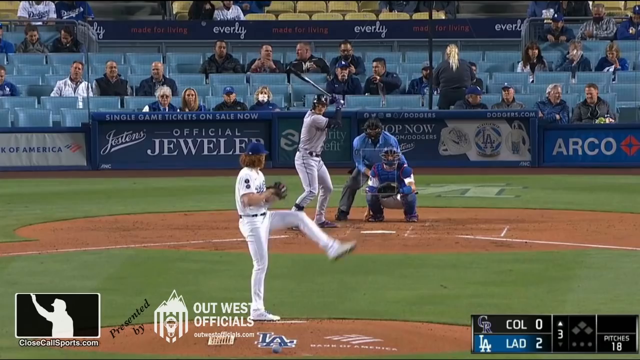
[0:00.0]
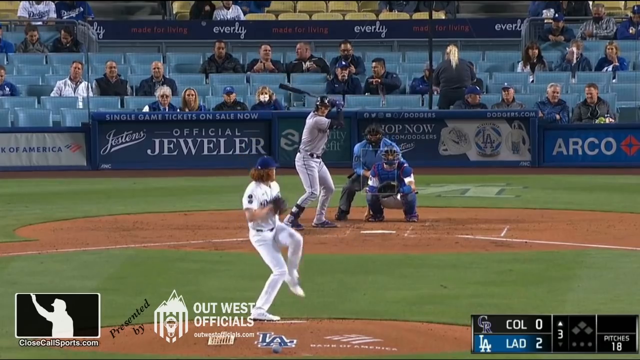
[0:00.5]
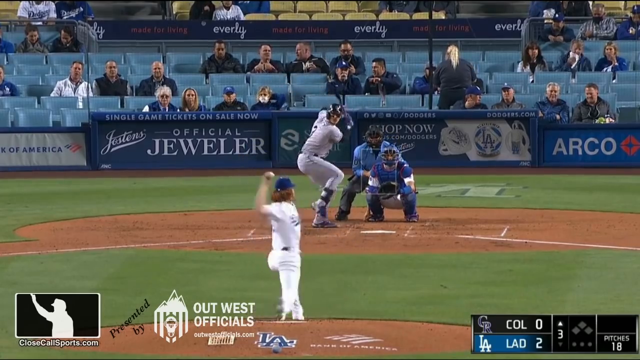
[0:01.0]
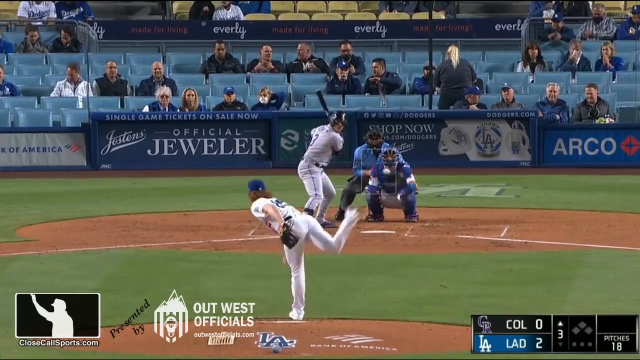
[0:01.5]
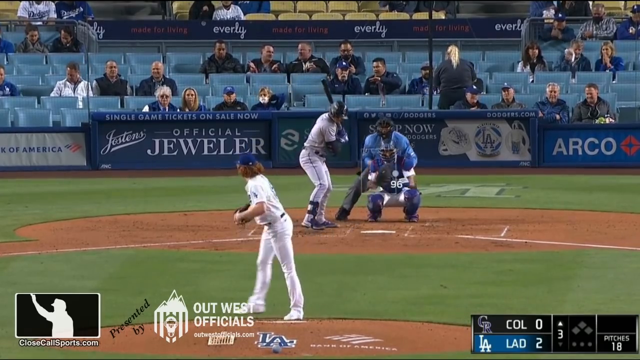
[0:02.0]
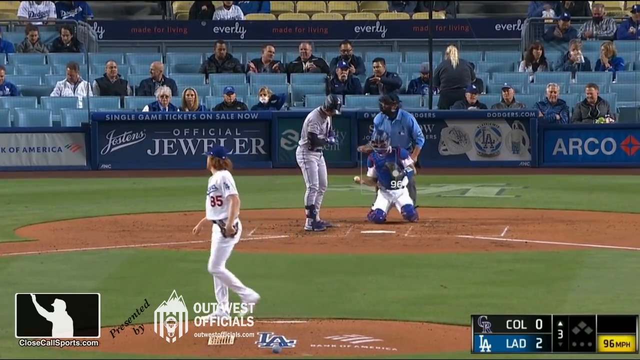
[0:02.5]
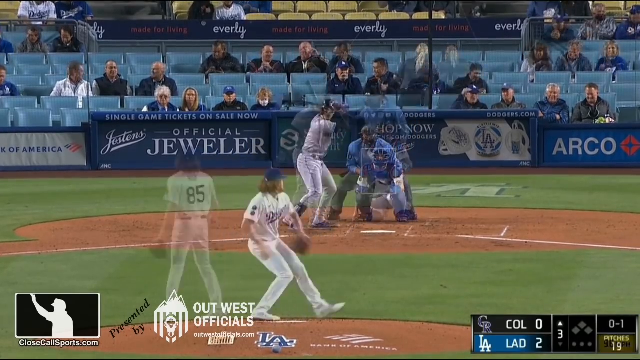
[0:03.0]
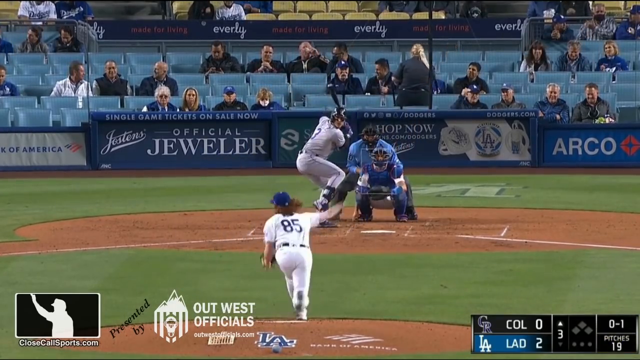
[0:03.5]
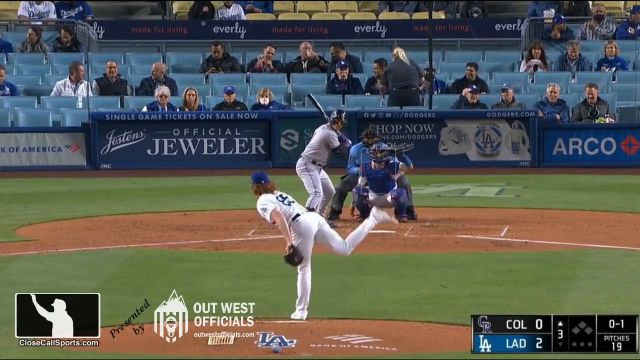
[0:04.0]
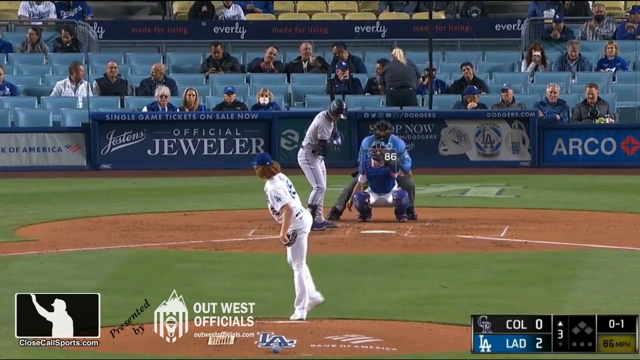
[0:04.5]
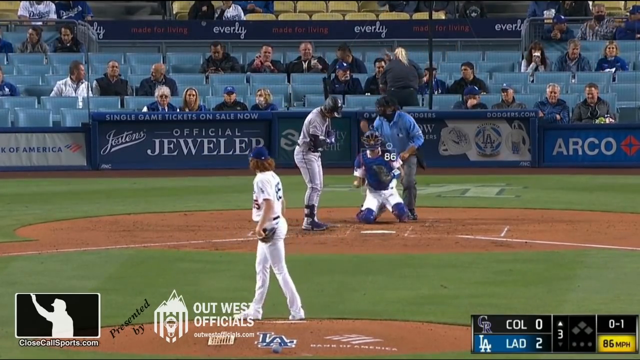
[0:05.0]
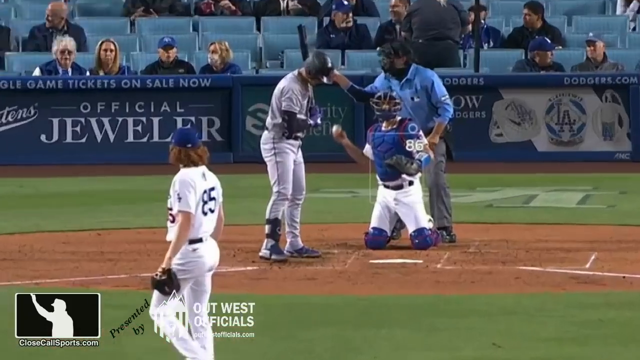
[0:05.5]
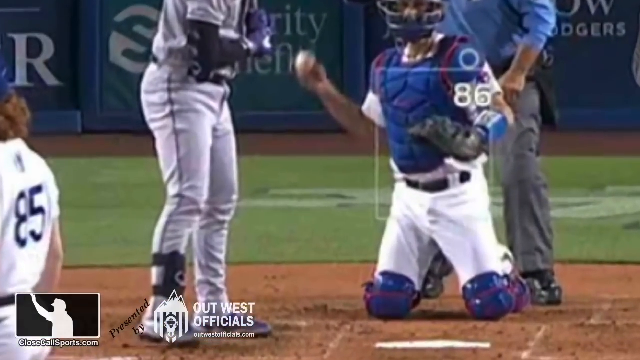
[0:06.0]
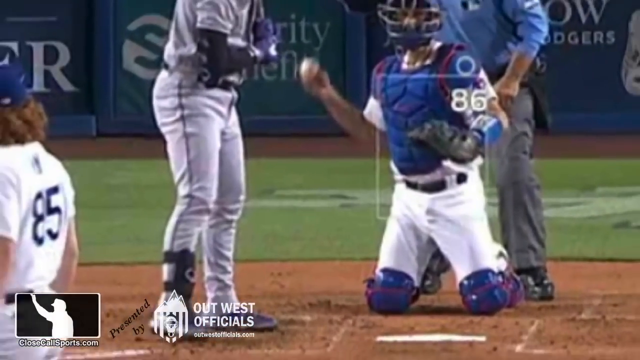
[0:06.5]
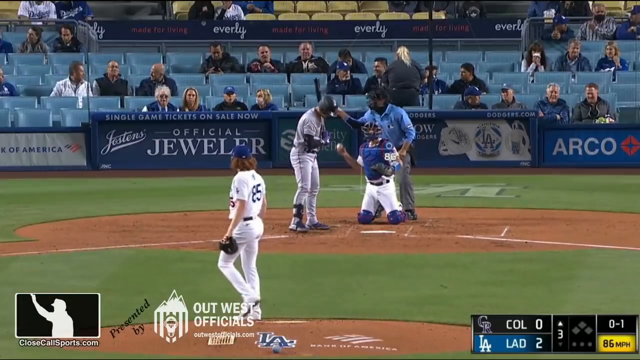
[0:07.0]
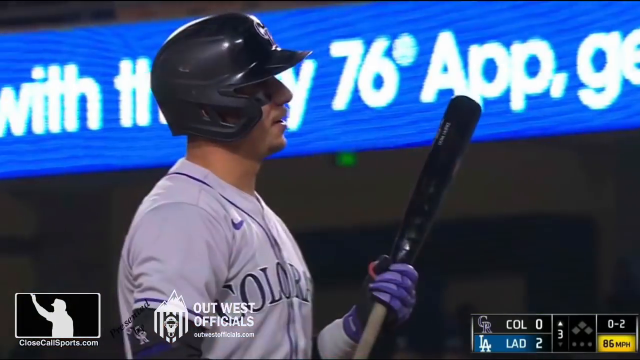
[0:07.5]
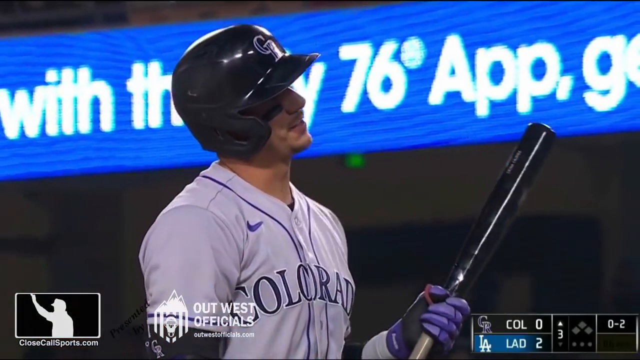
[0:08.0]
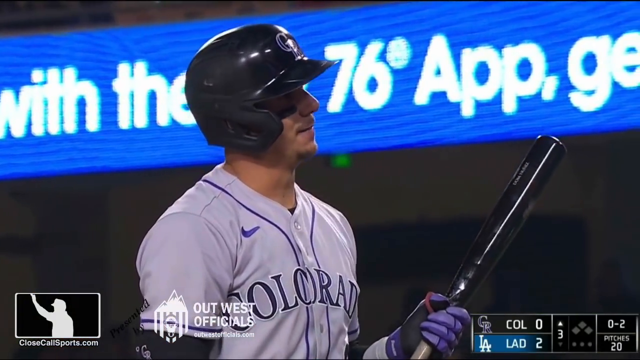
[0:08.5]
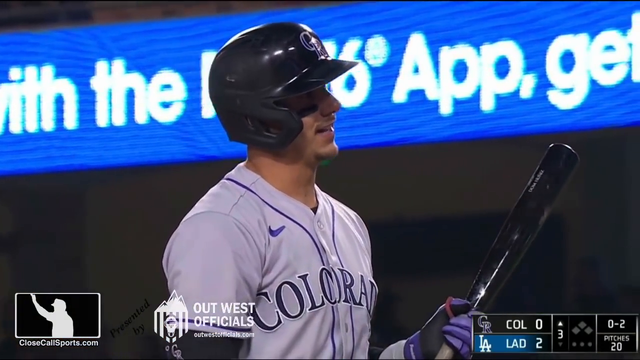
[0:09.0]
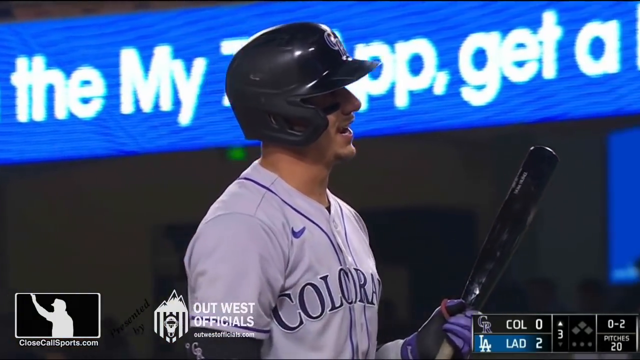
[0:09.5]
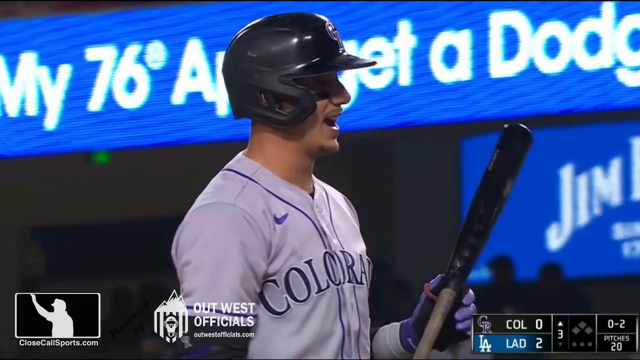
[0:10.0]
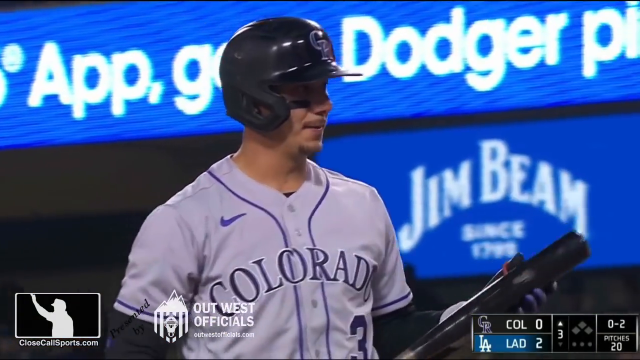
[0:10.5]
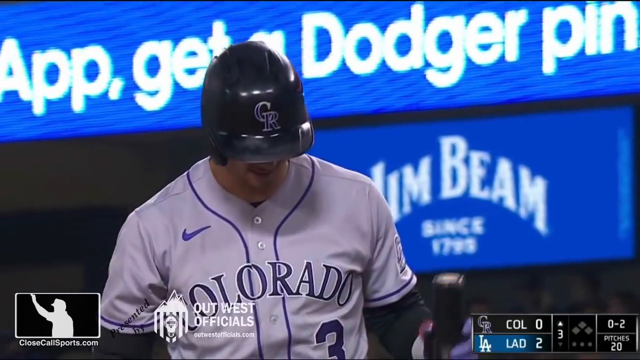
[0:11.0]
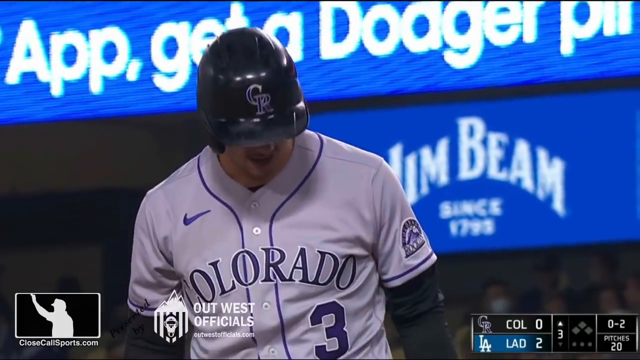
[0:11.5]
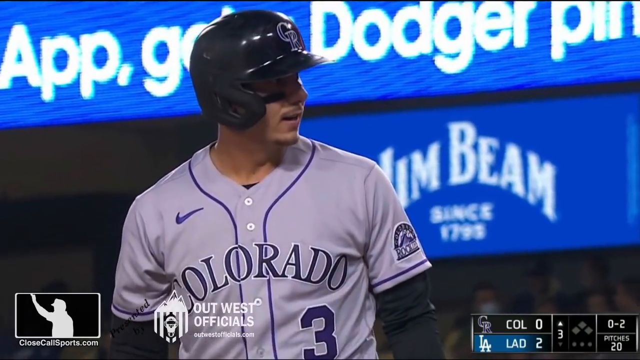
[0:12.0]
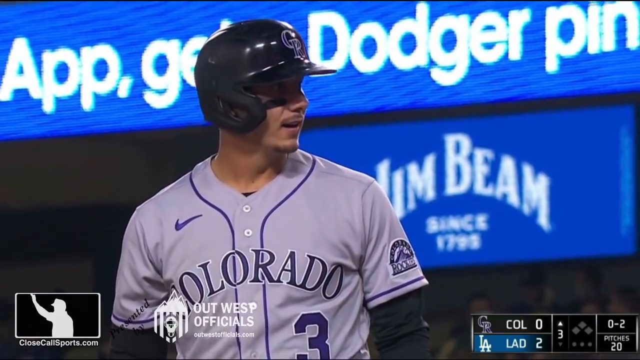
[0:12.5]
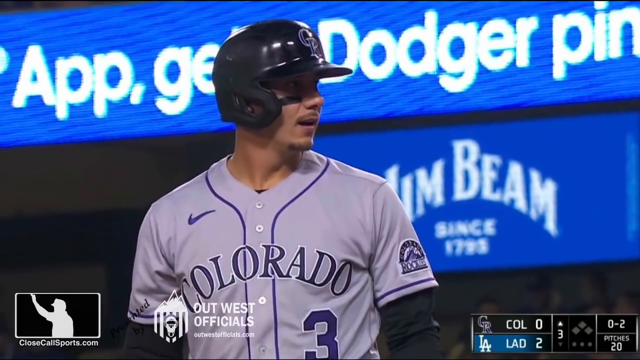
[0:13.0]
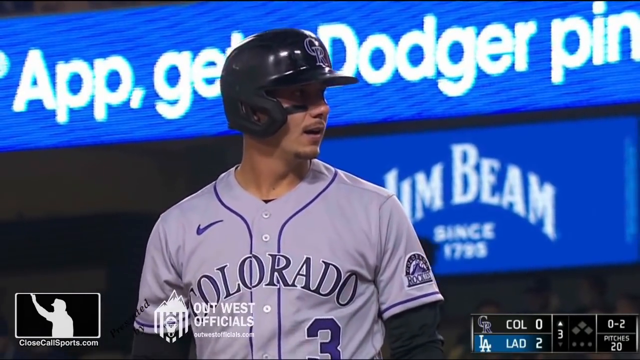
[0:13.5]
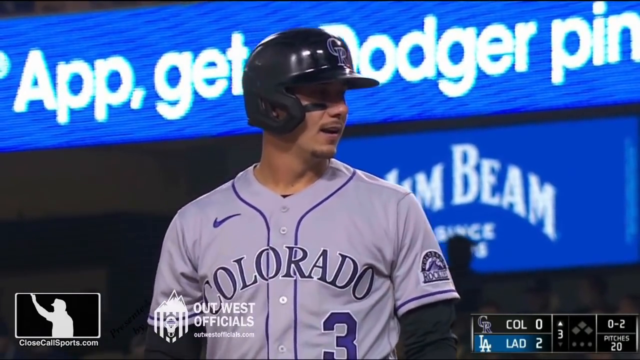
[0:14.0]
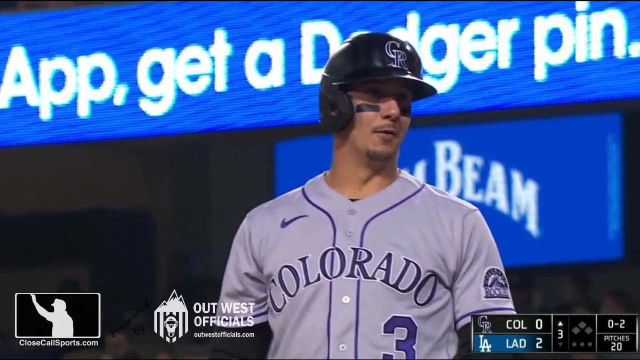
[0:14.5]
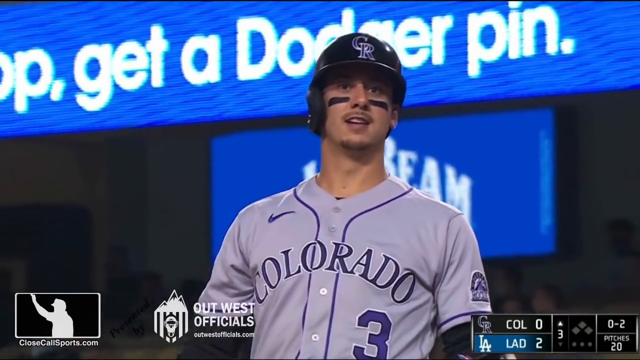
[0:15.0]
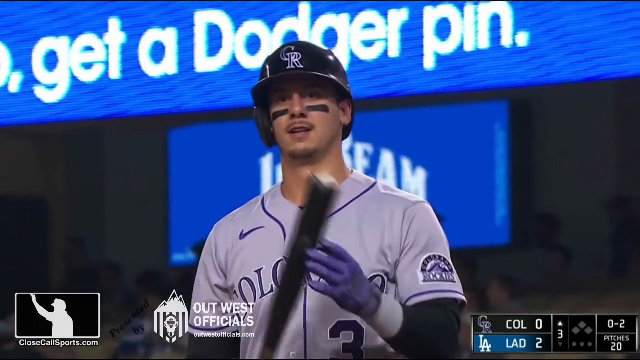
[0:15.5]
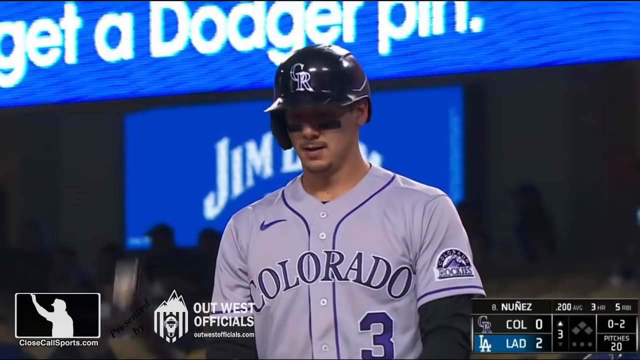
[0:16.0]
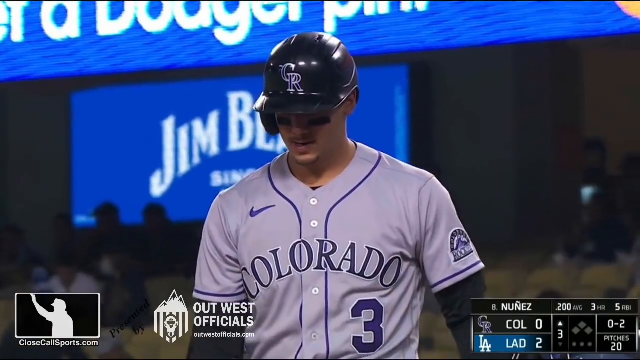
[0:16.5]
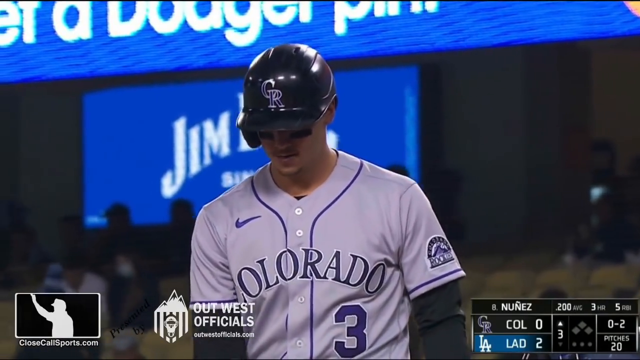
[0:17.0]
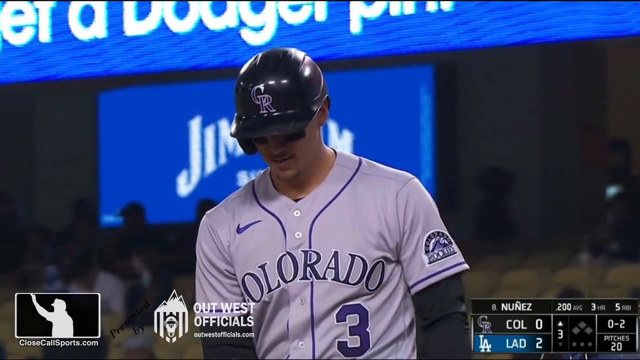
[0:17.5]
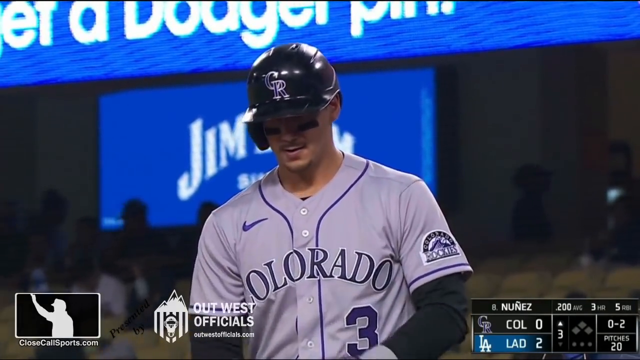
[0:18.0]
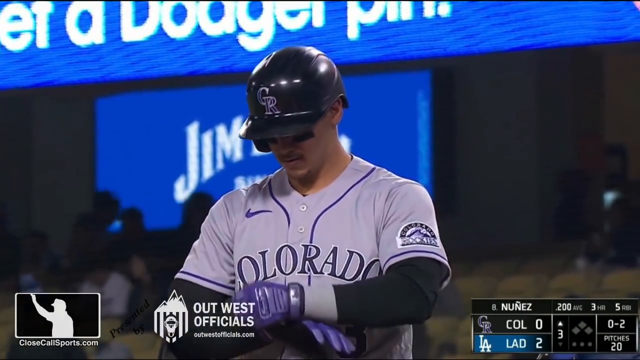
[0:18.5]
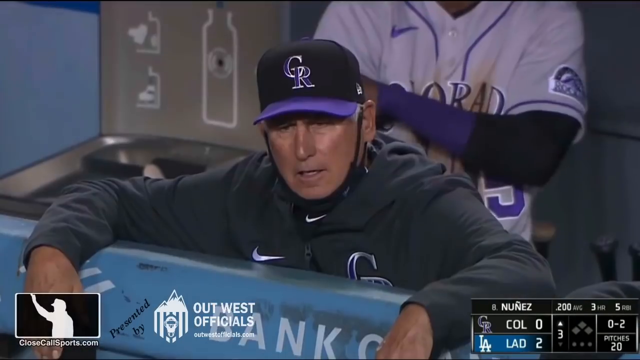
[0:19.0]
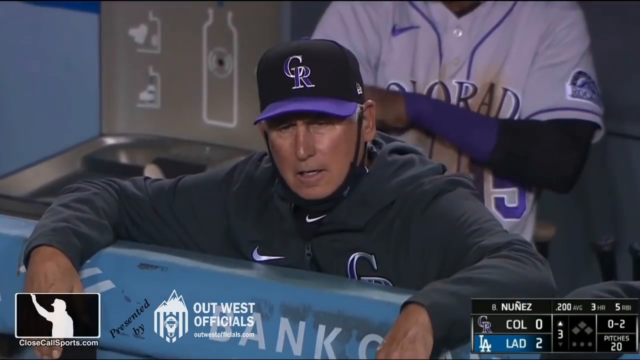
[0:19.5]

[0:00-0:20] An MLB baseball game between the Los Angeles Dodgers and the Colorado Rockies is underway. A marquee in the bottom right-hand corner shows the Dodgers leading two to nothing in the top of the third inning. A long-haired man in a blue cap pitches for the Dodgers while a Rockies player is at the plate. The pitcher winds up and makes his motion toward home plate. The umpire puts his arm up and calls a strike, although the strike zone system shows the 86 mile-per-hour pitch was completely out of the zone. The Rockies hitter kind of just stands there and looks back, then attempts to say something to the umpire.